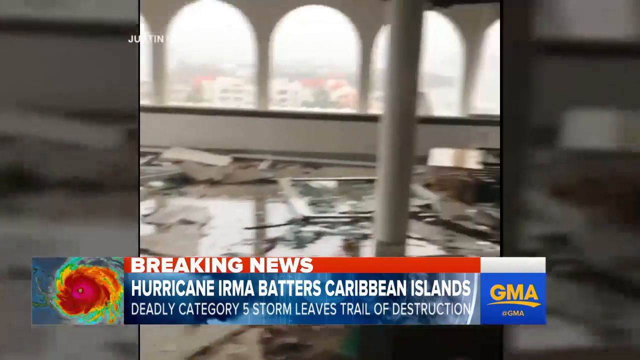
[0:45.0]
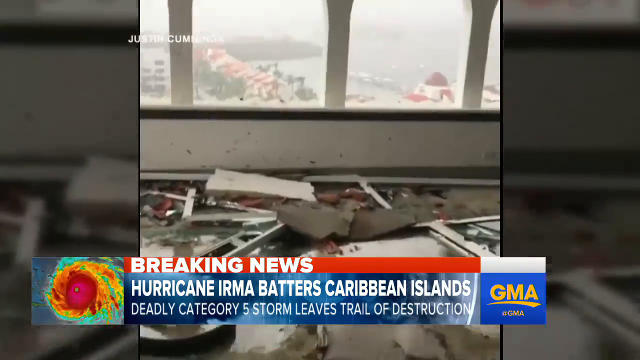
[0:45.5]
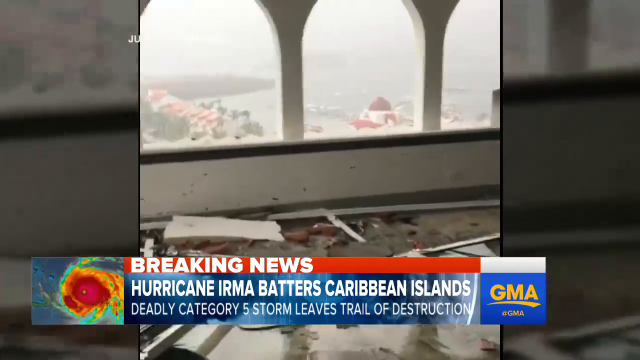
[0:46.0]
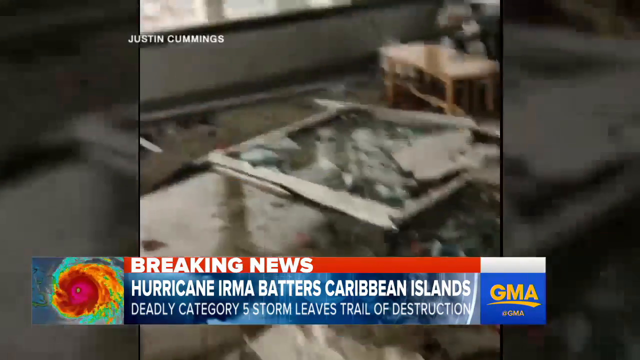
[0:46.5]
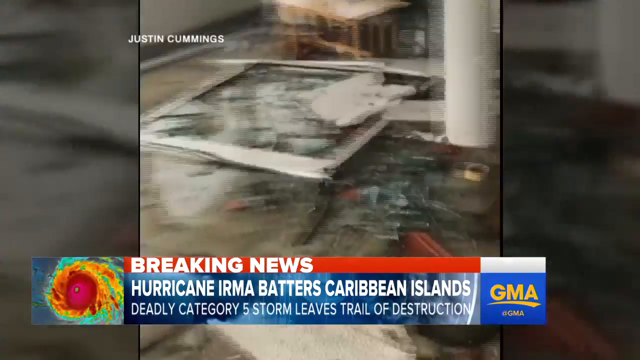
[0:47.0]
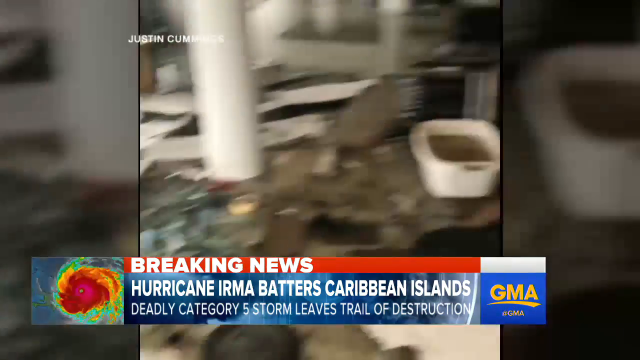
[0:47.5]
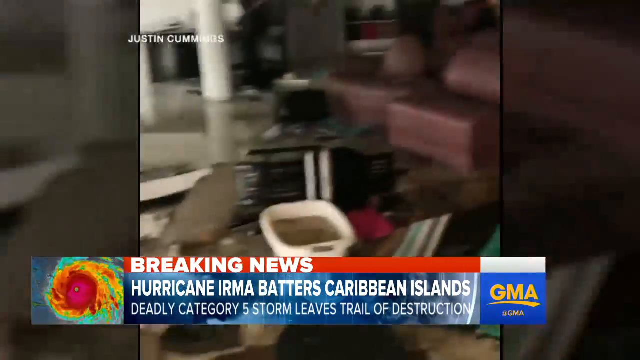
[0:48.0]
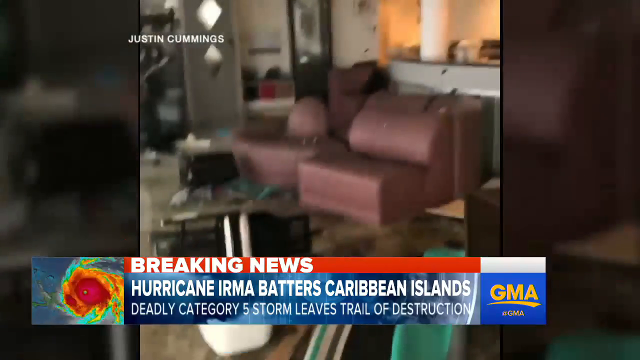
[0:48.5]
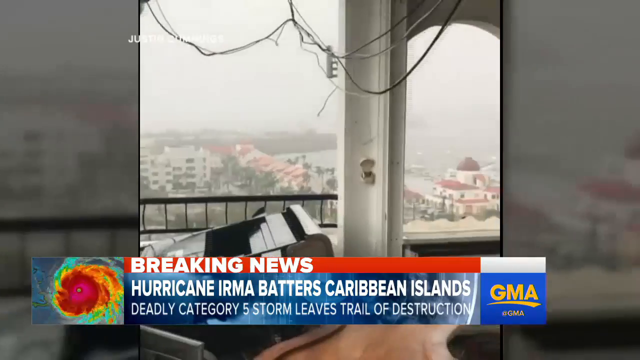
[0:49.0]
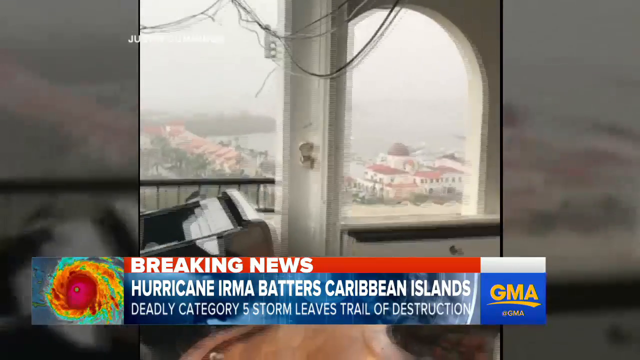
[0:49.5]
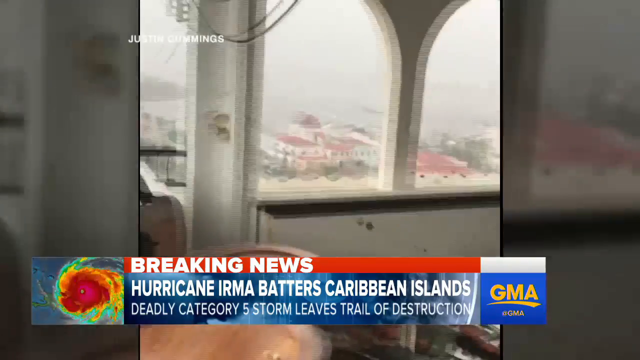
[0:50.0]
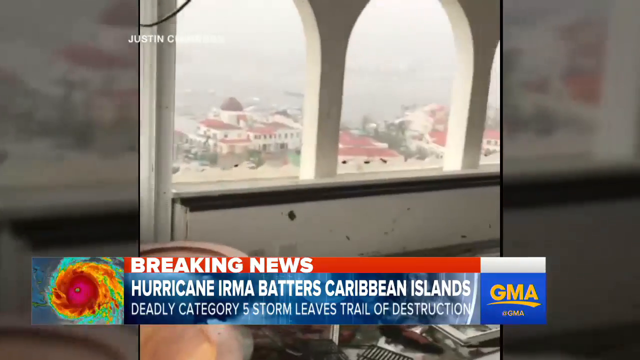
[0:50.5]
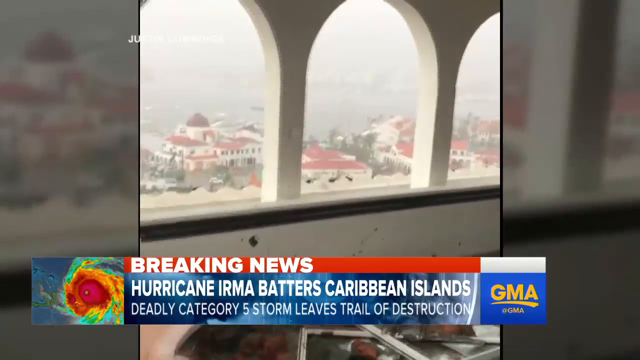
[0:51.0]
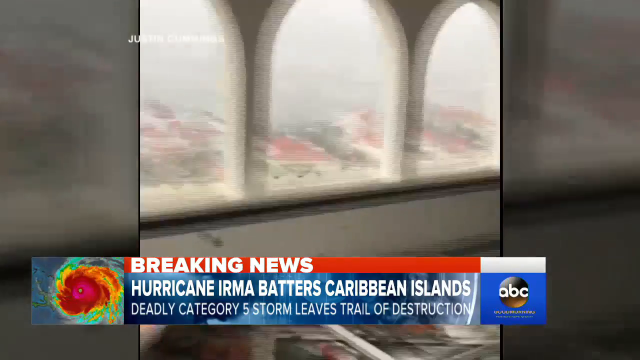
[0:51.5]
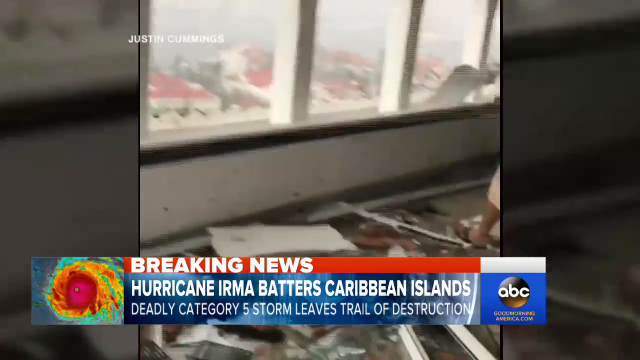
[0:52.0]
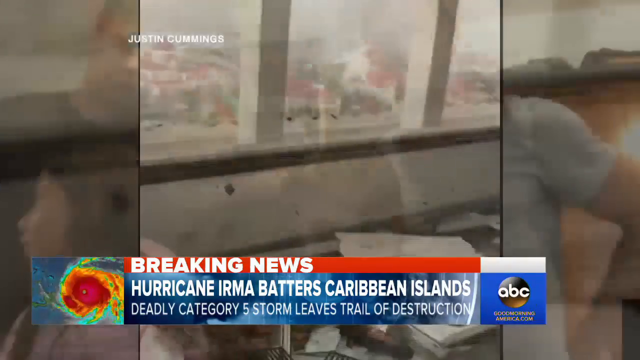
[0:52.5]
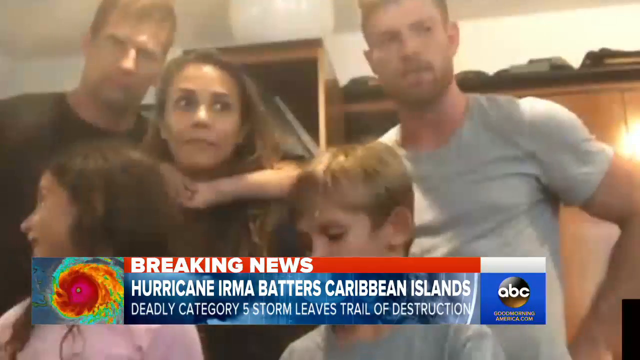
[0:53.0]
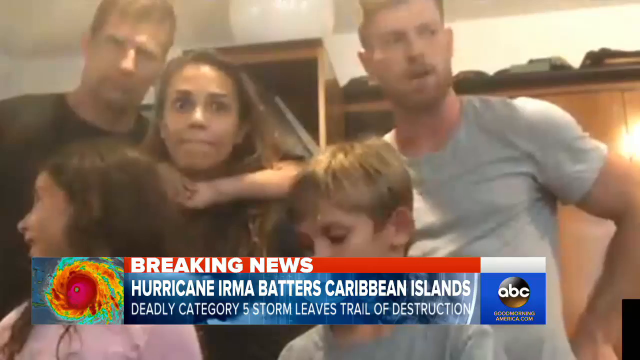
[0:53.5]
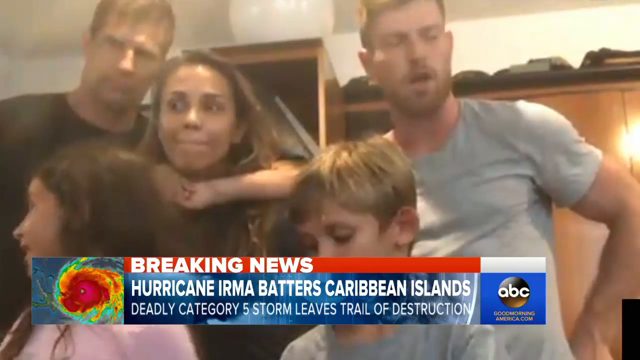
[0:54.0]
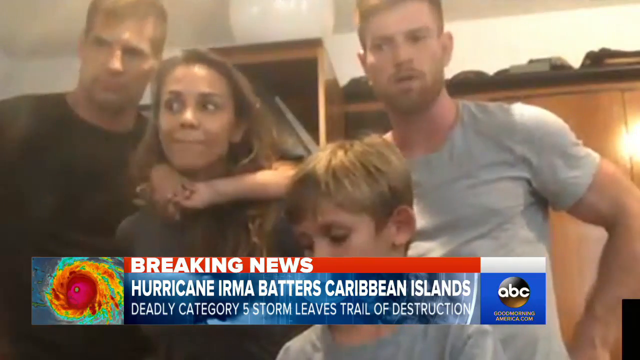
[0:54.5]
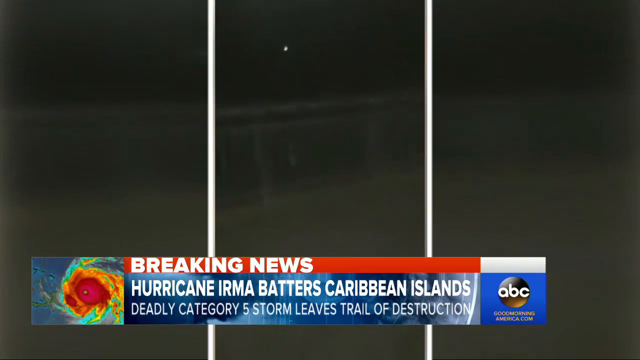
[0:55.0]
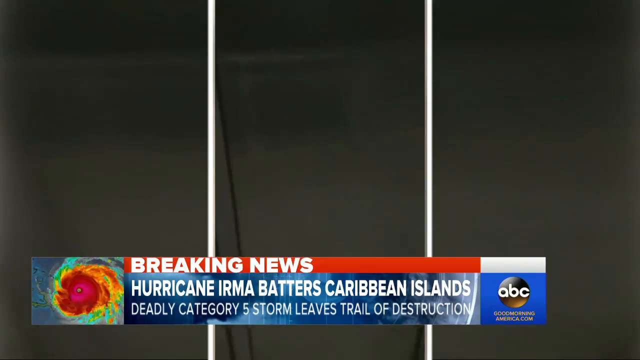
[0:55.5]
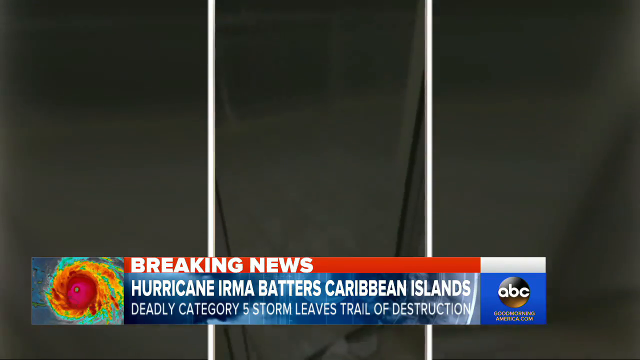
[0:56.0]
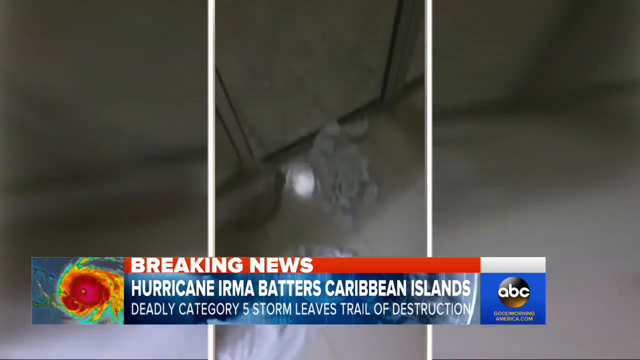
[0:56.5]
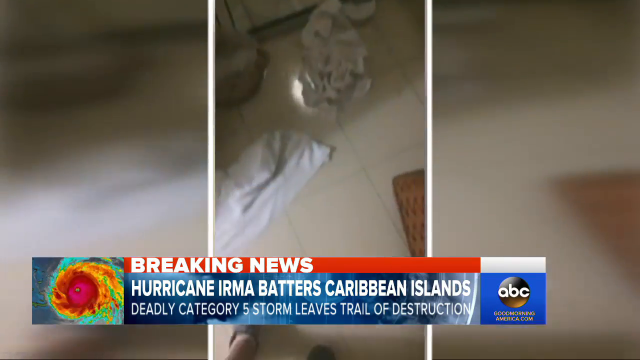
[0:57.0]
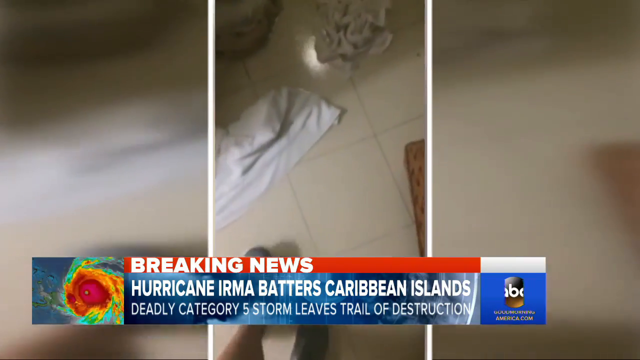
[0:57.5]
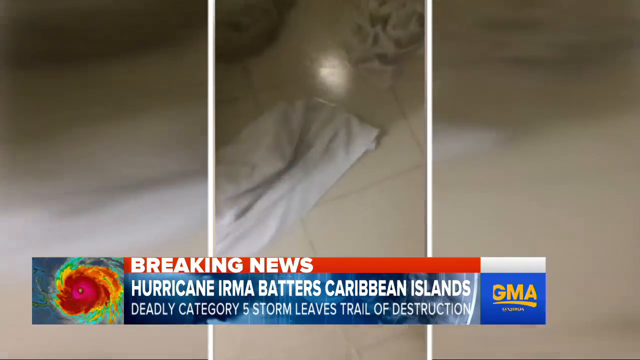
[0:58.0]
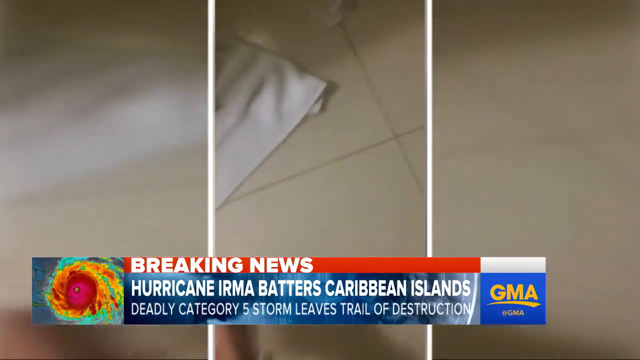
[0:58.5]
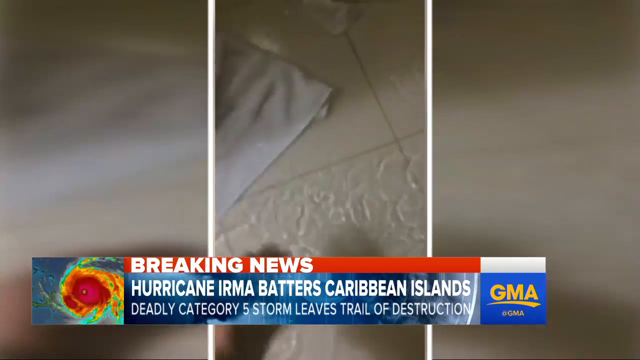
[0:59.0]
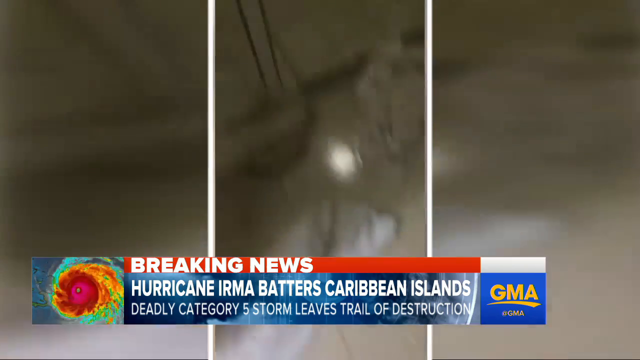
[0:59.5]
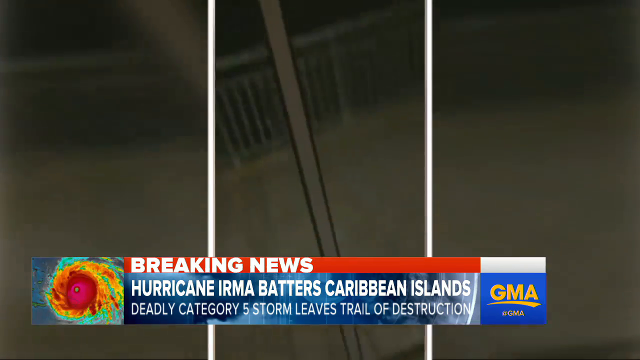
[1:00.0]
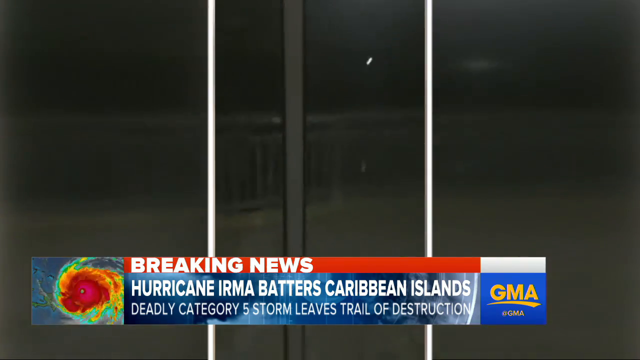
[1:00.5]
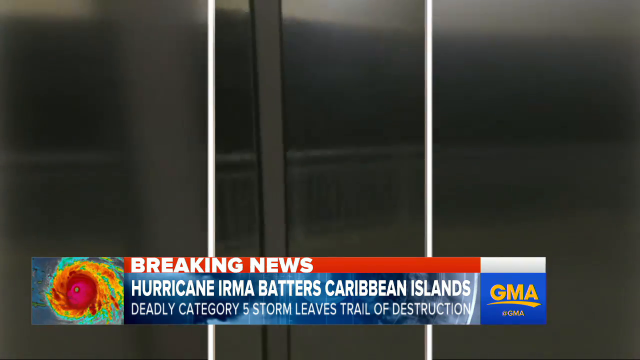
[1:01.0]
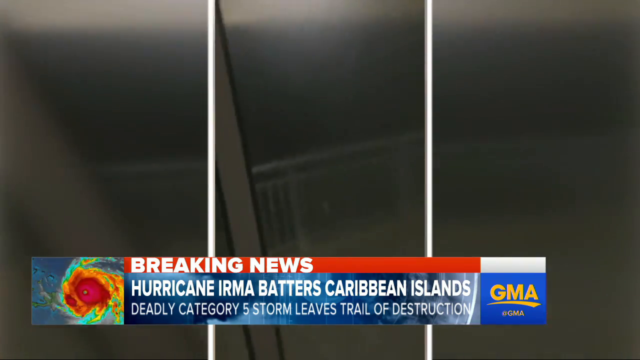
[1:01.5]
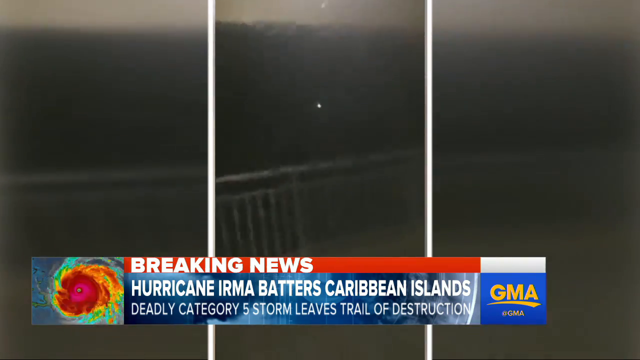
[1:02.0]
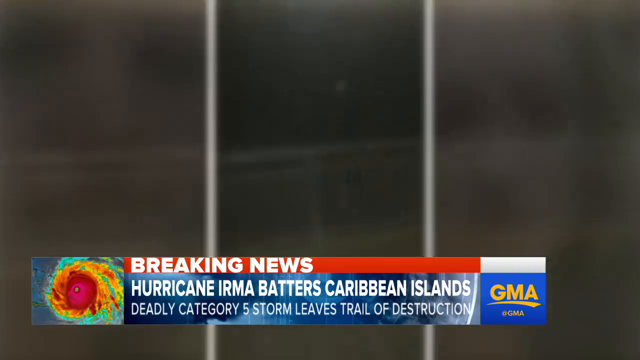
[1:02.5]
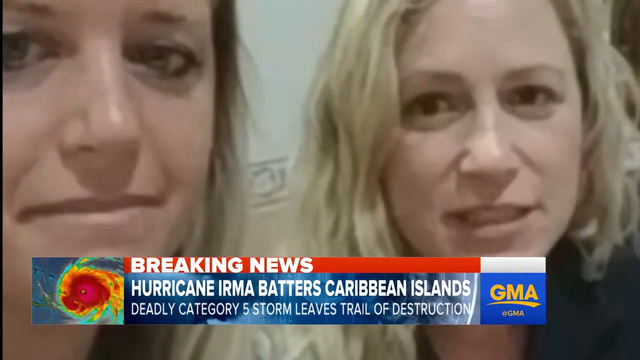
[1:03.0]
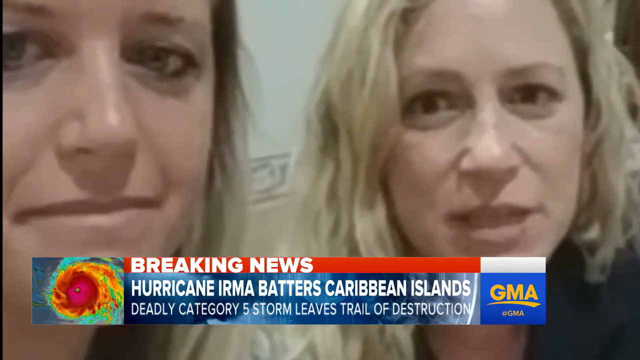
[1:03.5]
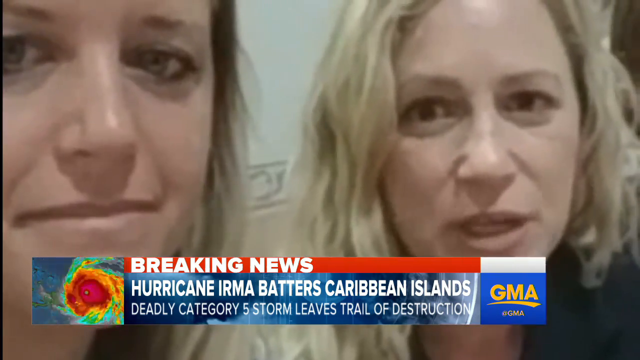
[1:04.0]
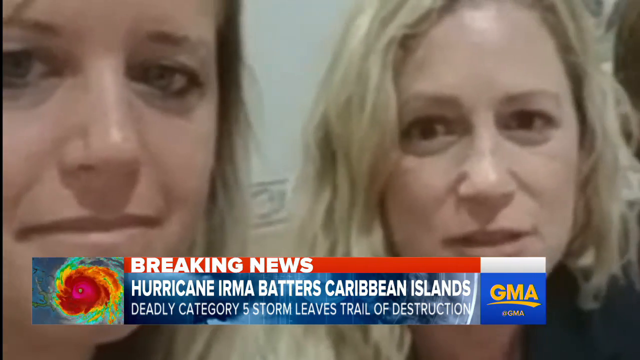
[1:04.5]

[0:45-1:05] Footage shows Hurricane Irma touching down on Caribbean islands, with what looks like an enormous amount of debris and affected buildings. A family is shown in what may be the inside of where they are staying, and there appears to be water that has gotten inside; the building is not at ground level. A couple of children, a mother and a father stand and are interviewed, and what looks like two women are interviewed as well. There are lots of pieces of metal and pieces of building. The floor shown repeatedly looks like it has shallow water on its tile, with a couple of towels down to absorb the water. White buildings with reddish-colored roofs are visible, there is quite a bit of rain, and the sky has a grayish cast. The women being interviewed appear somewhat calm, and the family appears to be taking the whole thing in stride.